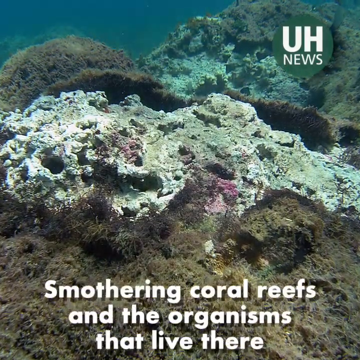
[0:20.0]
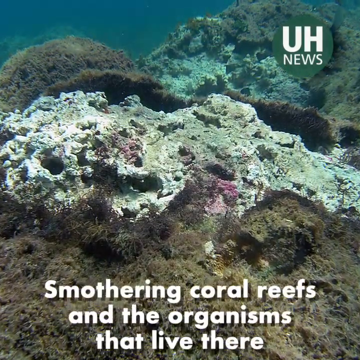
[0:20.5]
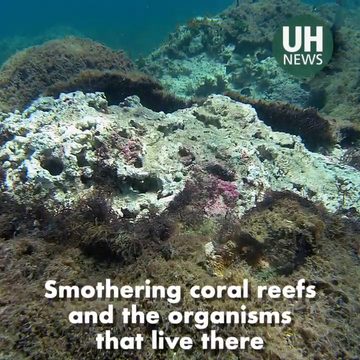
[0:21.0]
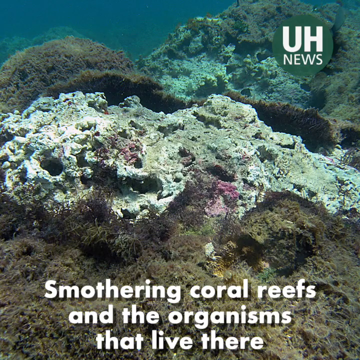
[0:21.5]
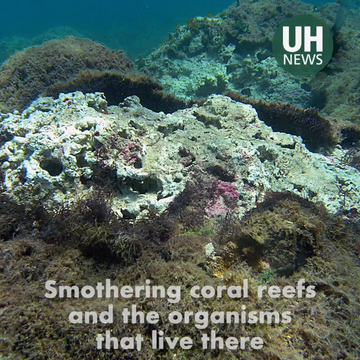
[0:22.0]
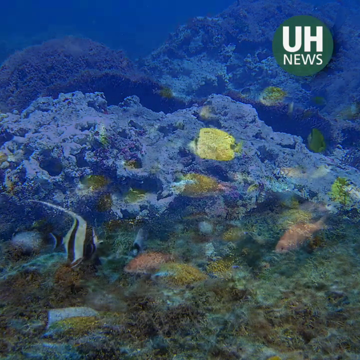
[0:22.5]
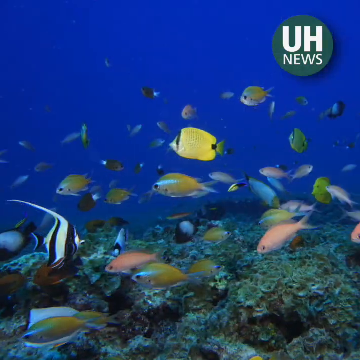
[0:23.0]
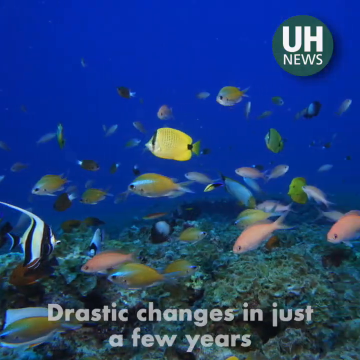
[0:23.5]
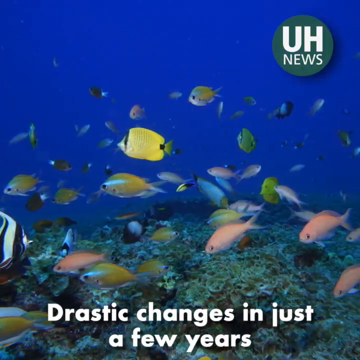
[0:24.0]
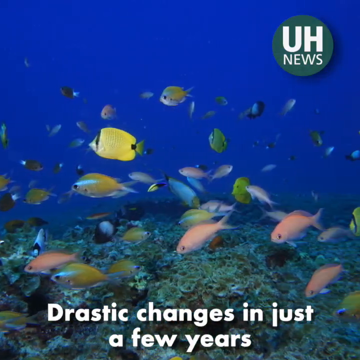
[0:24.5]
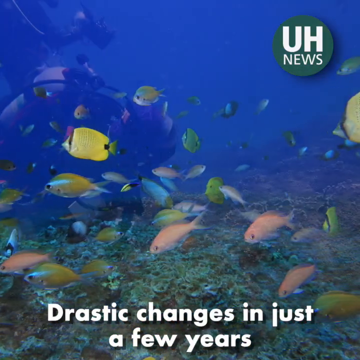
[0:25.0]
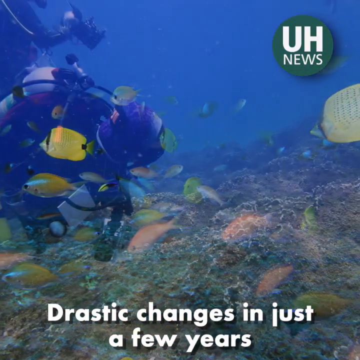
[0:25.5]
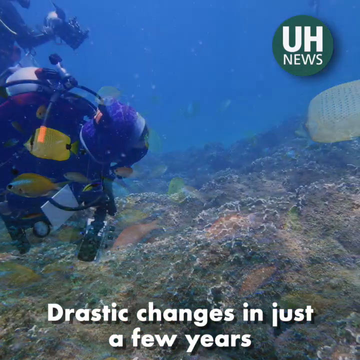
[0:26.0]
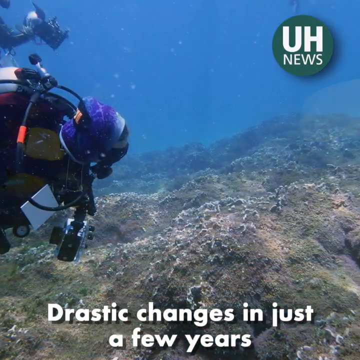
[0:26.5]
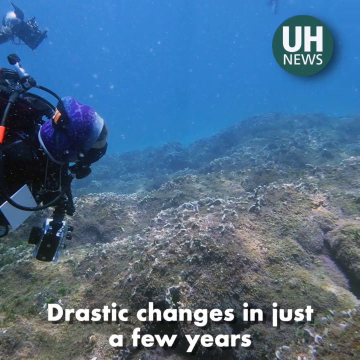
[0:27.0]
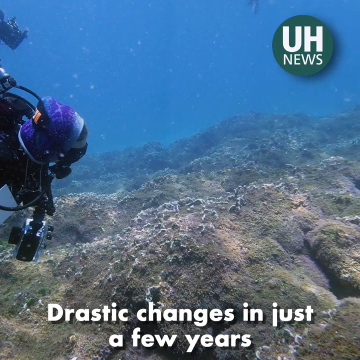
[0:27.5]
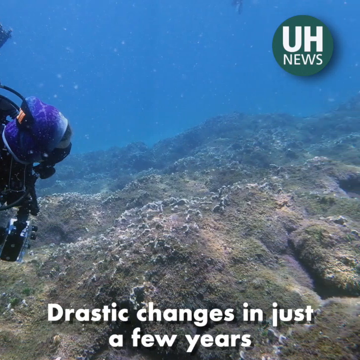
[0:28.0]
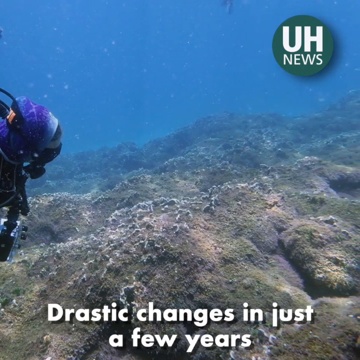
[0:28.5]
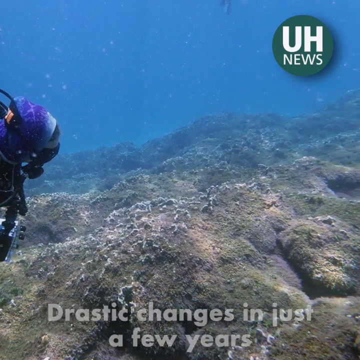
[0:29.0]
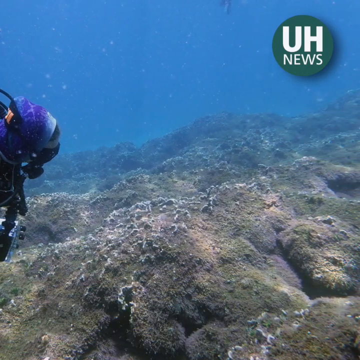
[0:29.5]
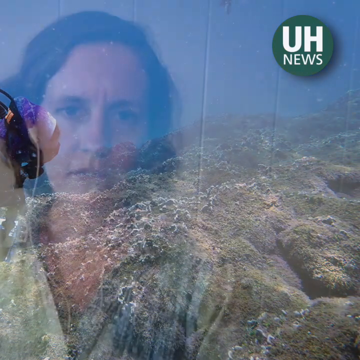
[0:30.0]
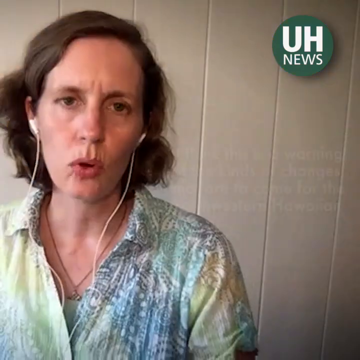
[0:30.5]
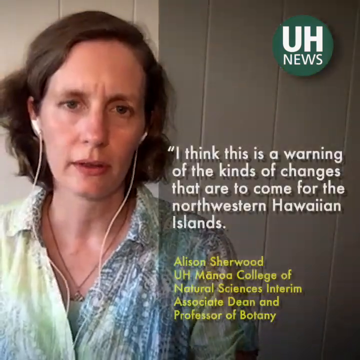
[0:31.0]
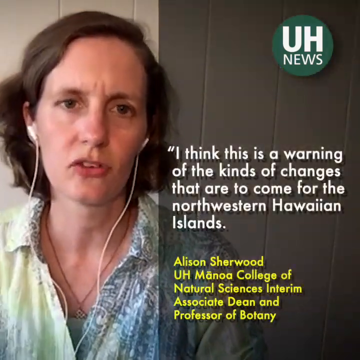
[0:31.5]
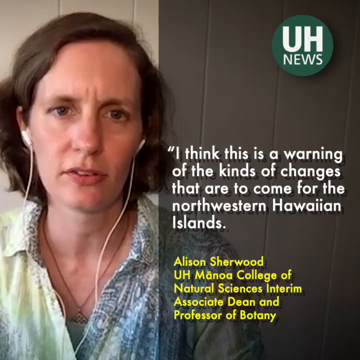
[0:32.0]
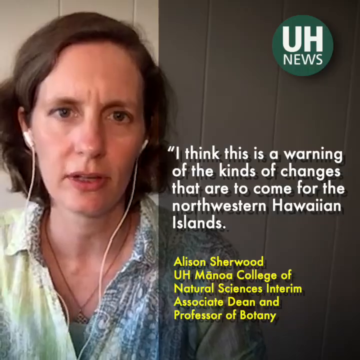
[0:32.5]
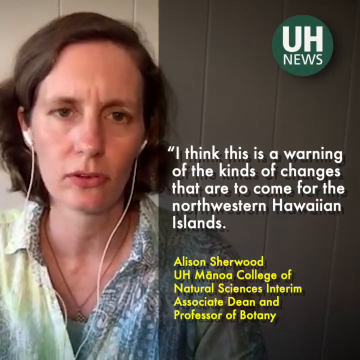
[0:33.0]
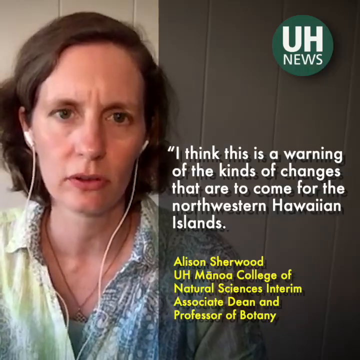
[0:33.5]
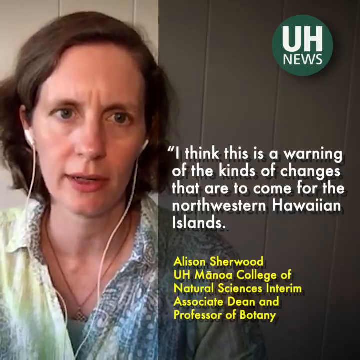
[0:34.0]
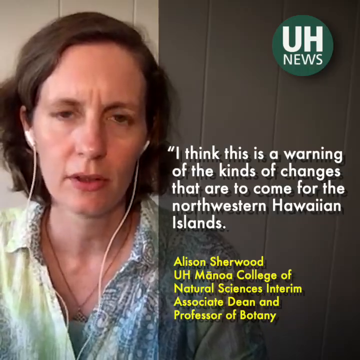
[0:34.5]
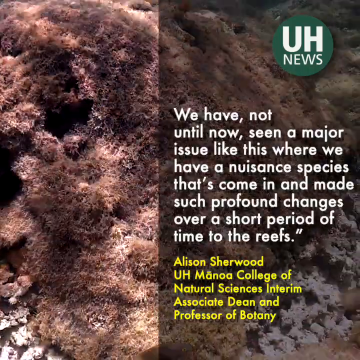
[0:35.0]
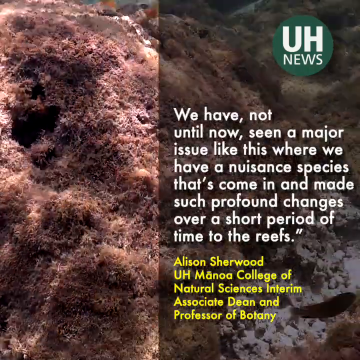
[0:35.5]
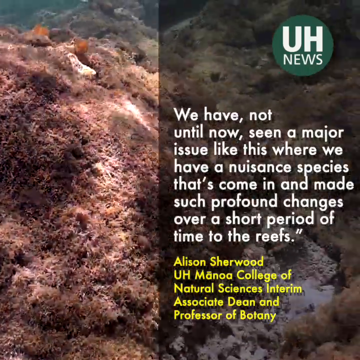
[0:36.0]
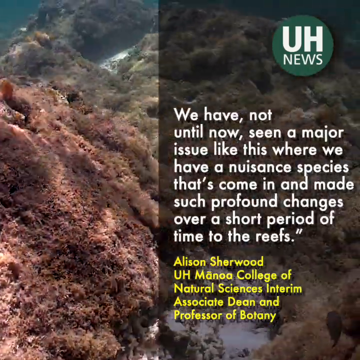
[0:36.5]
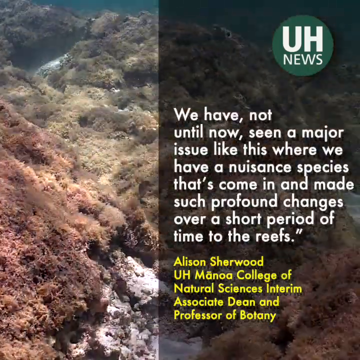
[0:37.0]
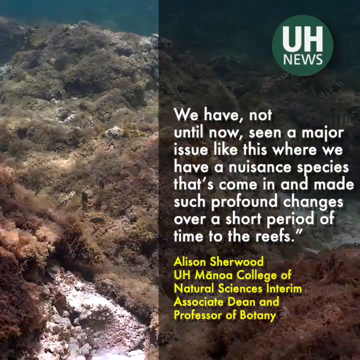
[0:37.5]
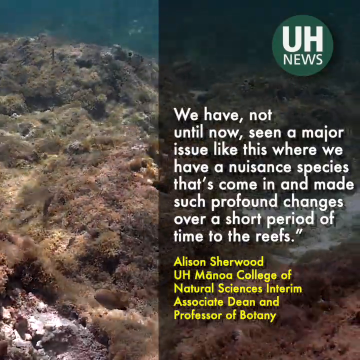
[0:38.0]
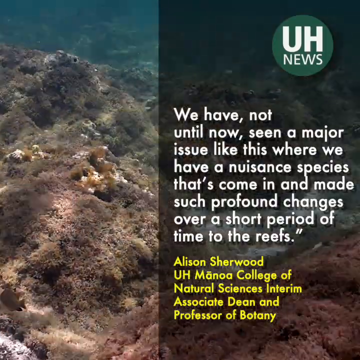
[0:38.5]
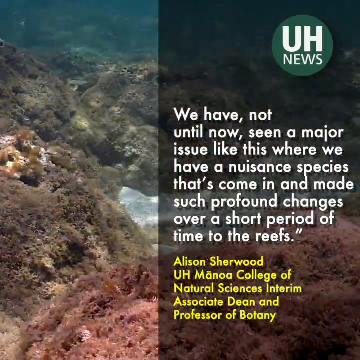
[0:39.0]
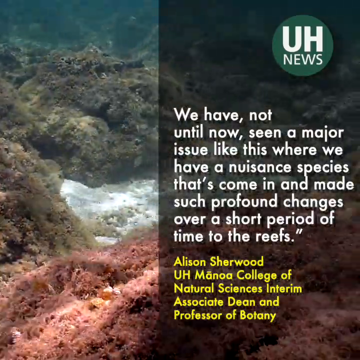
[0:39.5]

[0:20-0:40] The scene mixes through to a shot of many brightly coloured fish swimming in a sea that looks very vivid blue. There is a yellow fish in the middle of the frame, some orange fish, and a black and white striped angelfish in the bottom left of the screen swimming towards the middle. There are probably 30 to 40 fish in the shot, six of which look quite large in the foreground, including the bright yellow fish in the very centre swimming from right to left and the angelfish in the bottom left corner swimming from left to right. This is a photograph rather than video footage; the camera pans across it while the caption changes to "drastic changes in just a few years." It then mixes through to a photograph of divers looking at the algae on some rocks on the seabed, and the camera pans from left to right. Next comes video footage of a woman speaking directly to the camera. She is around 40, with short brown hair and a light green and blue shirt, and has small wired white headphones in her ears. A quote in white appears on the screen next to her: "I think this is a warning of the kinds of changes that are to come for the northwestern Hawaiian islands." Underneath, in a slightly smaller yellow font, is her name, "Alison Sherwood," and beneath that, "U.H. Manoa College of Natural Sciences Interim Associate Dean and Professor of Botany." She speaks directly to the camera with a sense of urgency. The video then cuts to footage of the ocean floor with rocks and algae. The right-hand side of the screen is much darker than the left because a semi-opaque black graphic strap has been placed over it, and her quote continues: "we have not until now seen a major issue like this where we have a nuisance species that's come in and made such profound changes over a short period of time to the reef." Her name and job title remain underneath the quote in small yellow text.